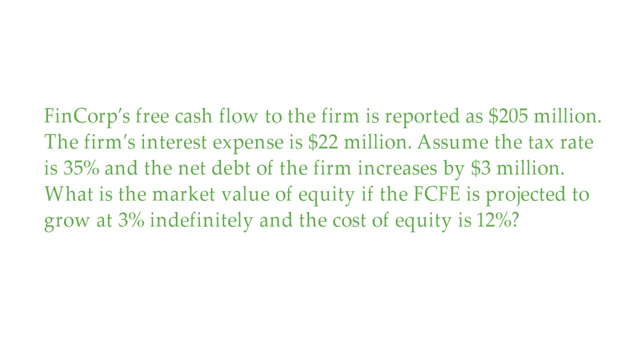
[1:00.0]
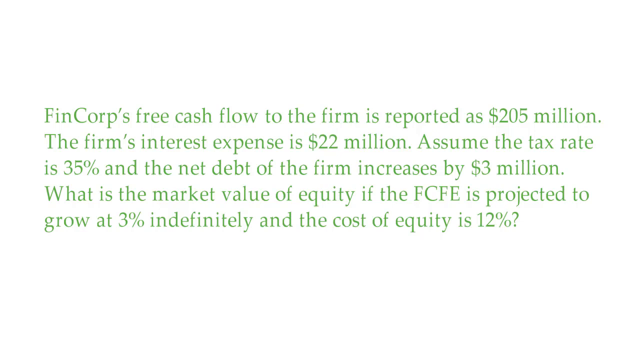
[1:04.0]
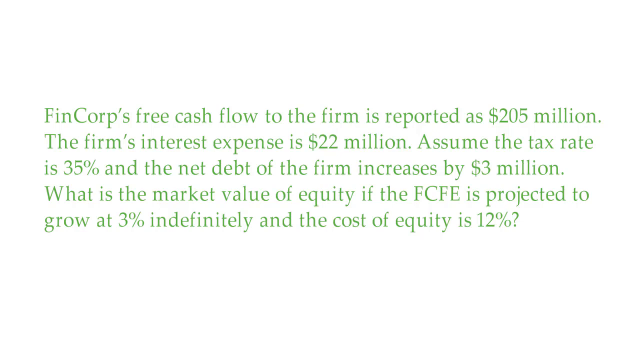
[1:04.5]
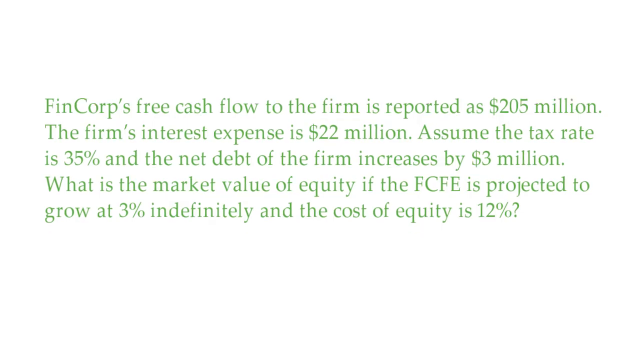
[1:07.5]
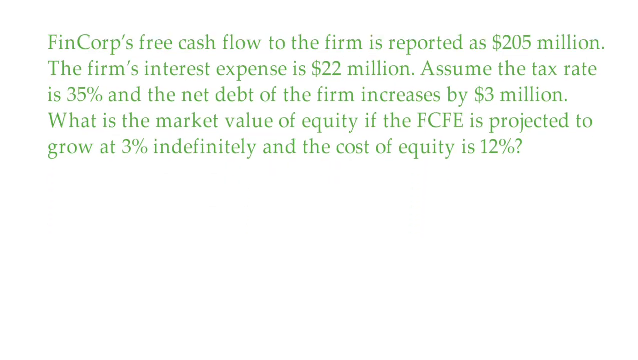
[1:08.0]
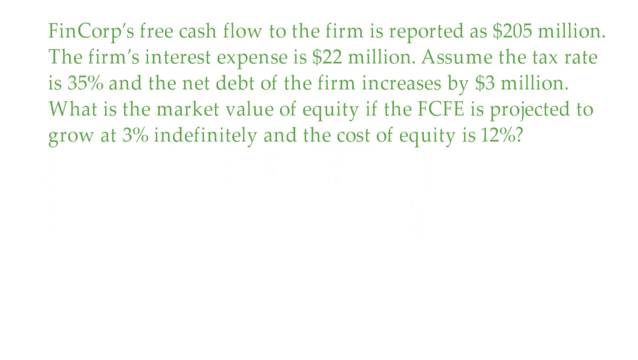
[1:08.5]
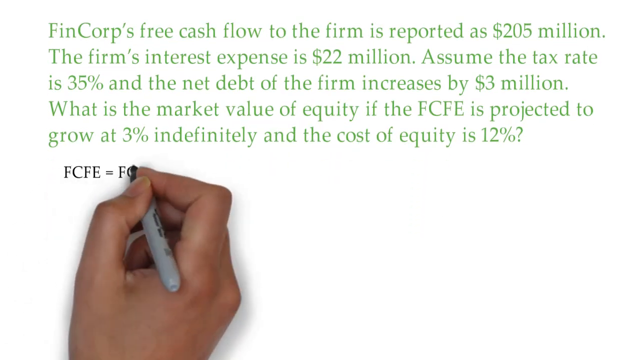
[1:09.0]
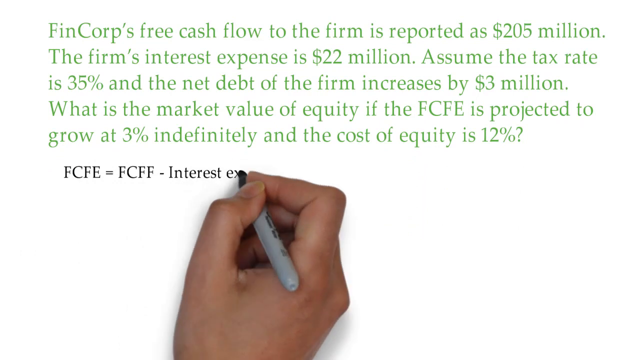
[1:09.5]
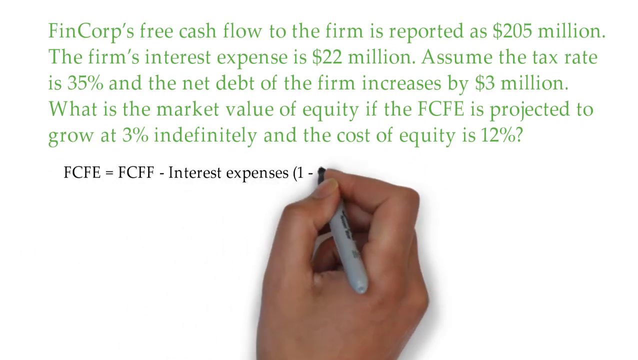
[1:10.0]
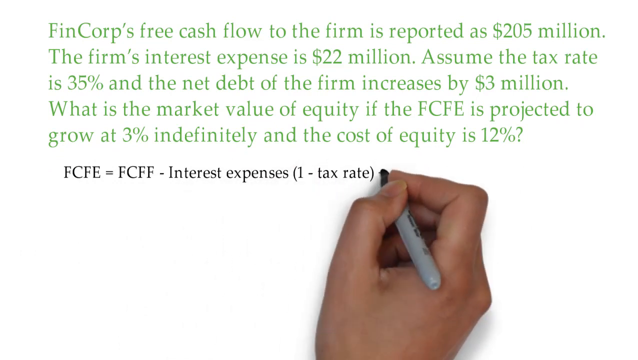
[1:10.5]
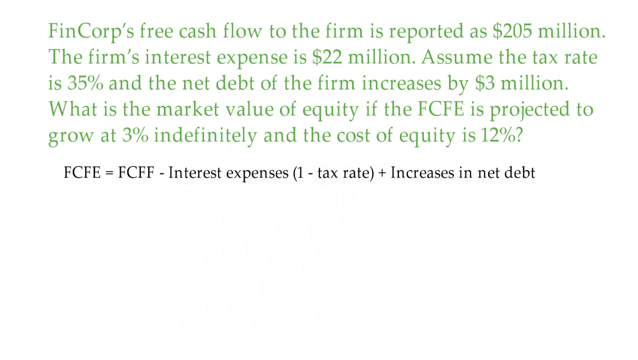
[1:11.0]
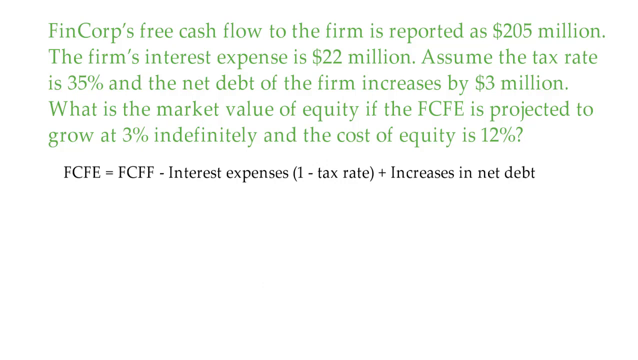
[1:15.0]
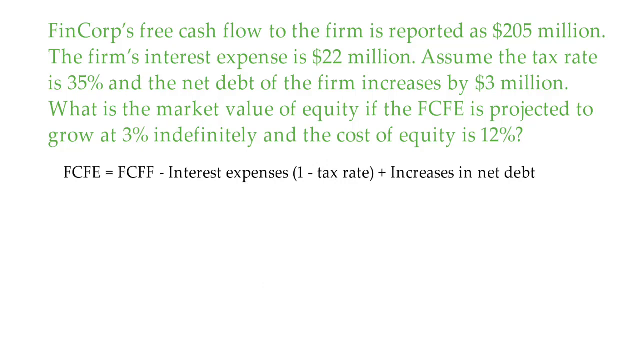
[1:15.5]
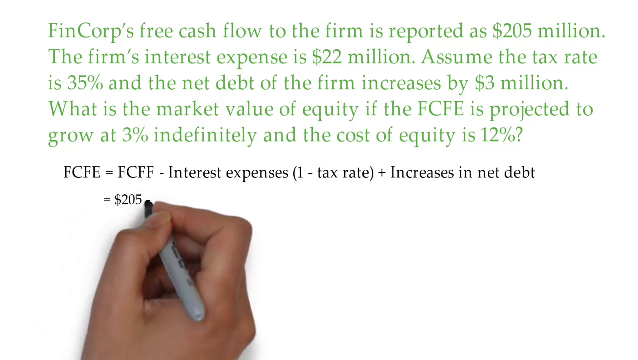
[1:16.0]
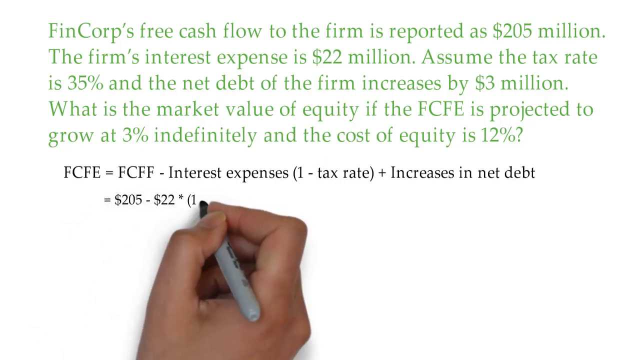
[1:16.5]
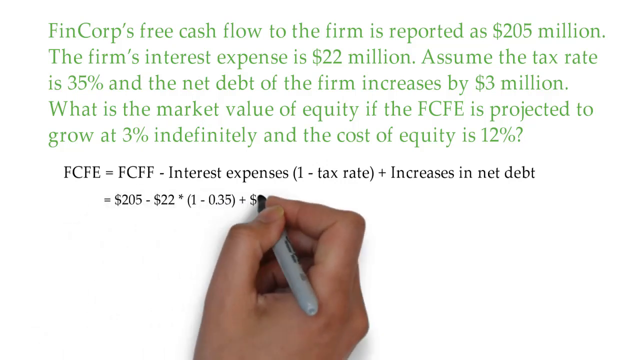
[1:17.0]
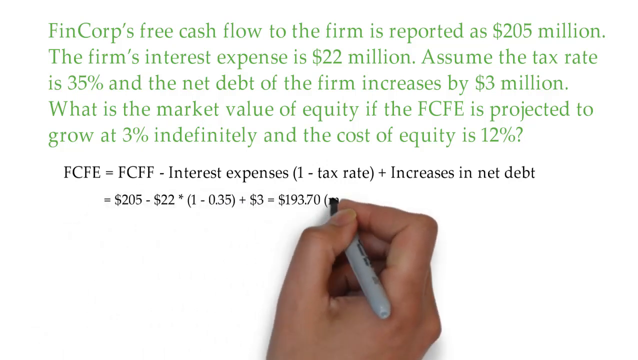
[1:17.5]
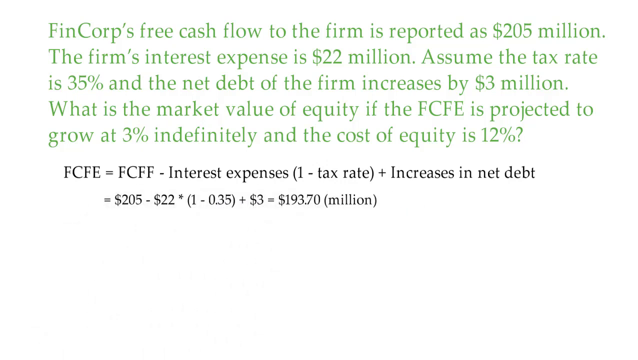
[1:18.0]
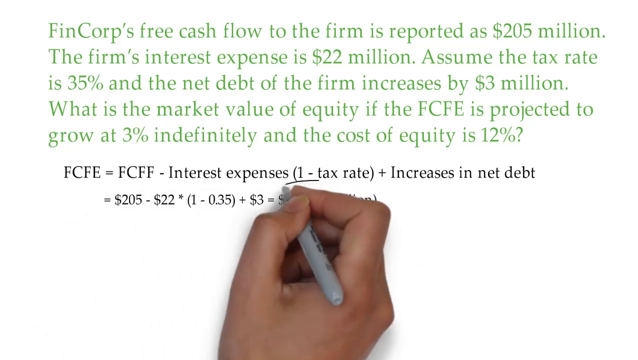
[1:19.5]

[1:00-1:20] Green text on a white background says: "FinCorp's free cash flow to the firm is reported as $205 million. The firm's interest expense is $22 million. Assume the tax rate is 35% and the net debt of the firm increases by $3 million. What is the market value of equity if the FCFE is projected to grow at 3% indefinitely and the cost of equity is 12%?" The text moves all the way to the top of the screen, and a hand writes in black sharpie "FCFE equals FCFF minus interest expenses, one minus tax rate plus increases in net debt". The hand then writes in black "equals 205 minus 22" with a little asterisk, followed by "1 minus 0.35 plus 3 dollars equals 193.70 million", and circles the answer of 193.70 million.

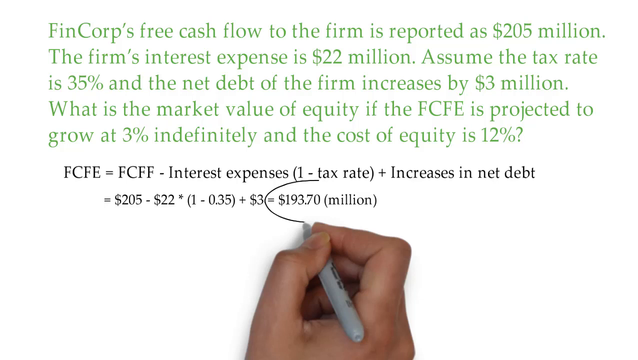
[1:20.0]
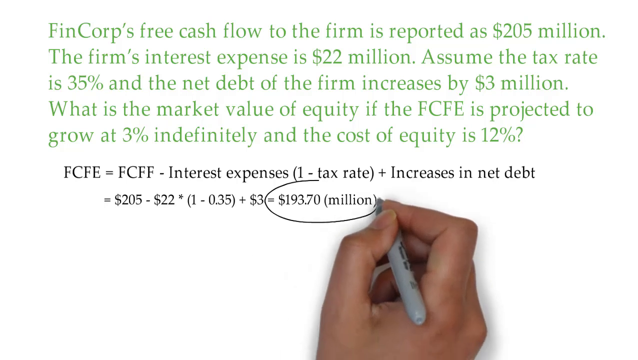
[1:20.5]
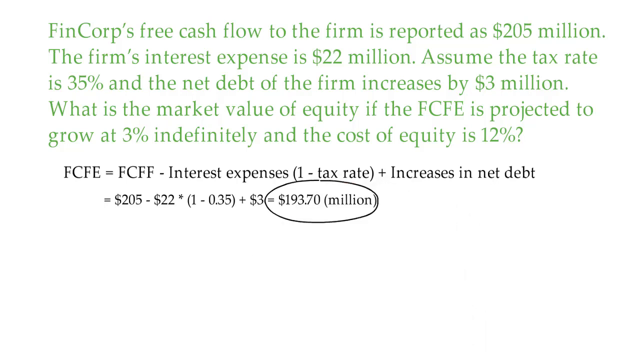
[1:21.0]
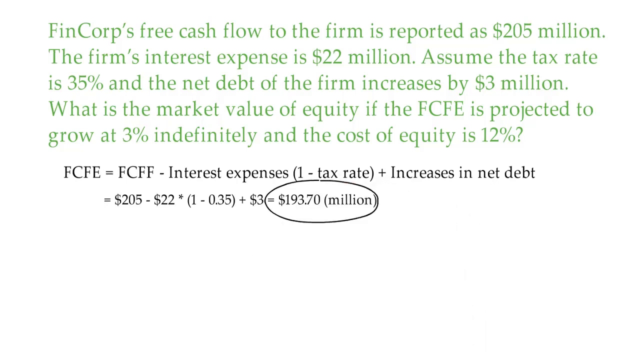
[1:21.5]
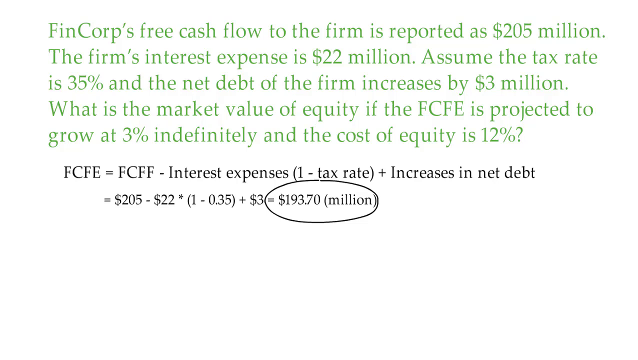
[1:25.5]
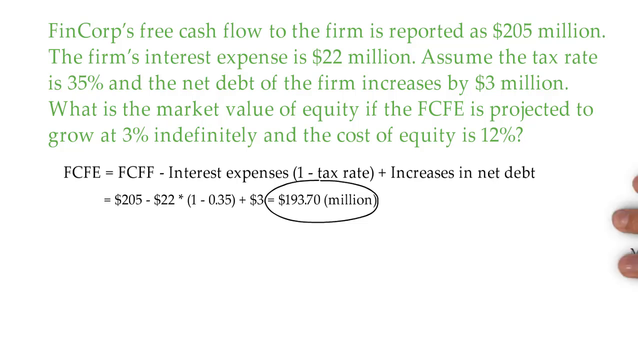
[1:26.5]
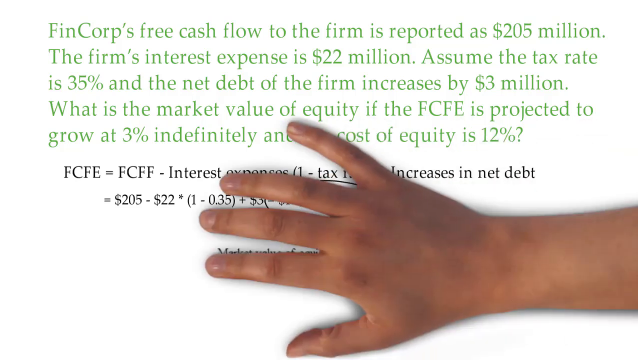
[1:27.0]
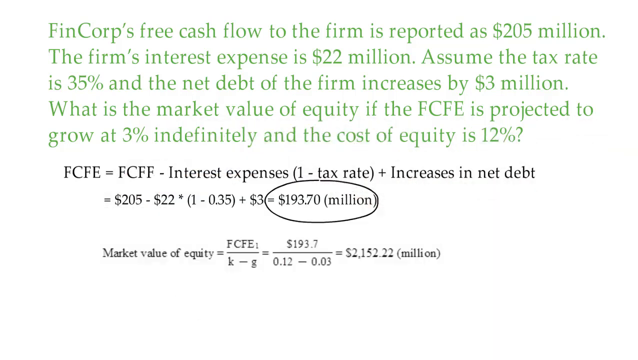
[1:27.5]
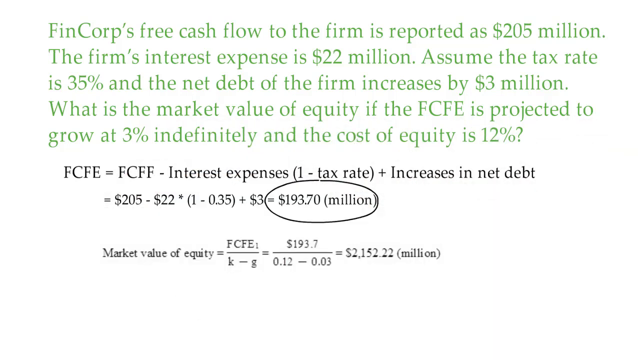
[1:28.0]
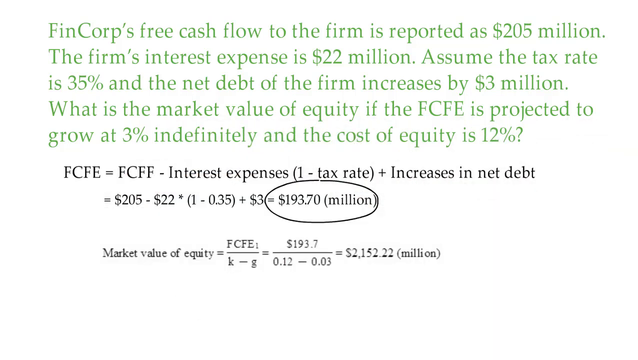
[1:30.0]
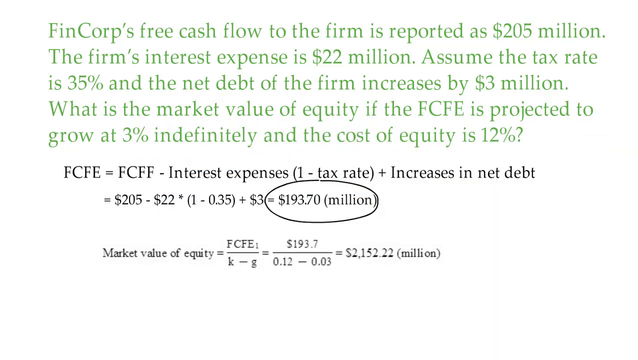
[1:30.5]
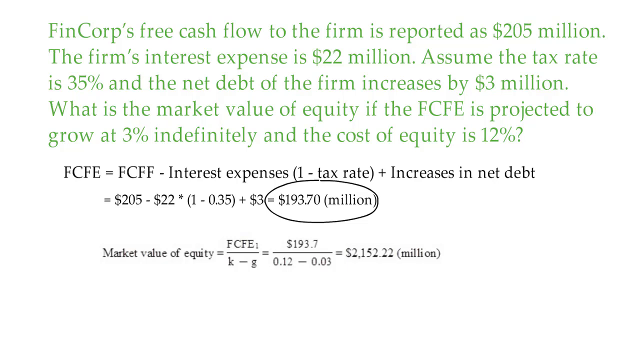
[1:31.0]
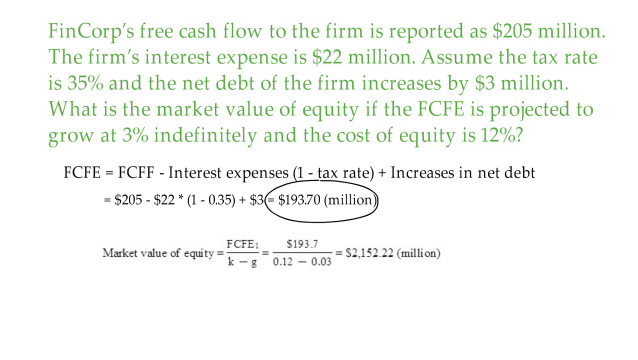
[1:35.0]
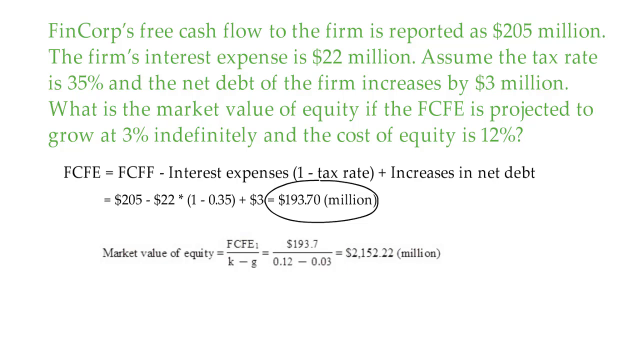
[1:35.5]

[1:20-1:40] A white background shows green and black text, and a hand holding a marker is on the screen. Green text at the top says: "FinCorps free cash flow to the firm is reported as $205 million. The firm's interest expense is $22 million. Assume the tax rate is 35% and the net debt of the firm increases by $3 million. What is the market value of equity if the FCFE is projected to grow 3% indefinitely and the cost of equity is 12%?" Black text below says "FCFE equals FCFF minus interest expense 1 minus tax rate plus increases in net debt equals $205 minus $22 asterisk 1 minus 0.35 plus $3 equals 193.70 million", and the hand circles the 193.70 million. The hand then comes onto the screen to wipe something, and text appears that says "market value of equity equals fcfe1 divided by k minus g equals 193.7 divided by 0.12 minus 0.03 equals 2152.22 million".